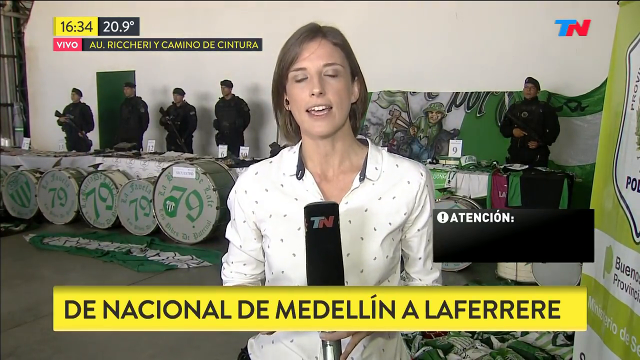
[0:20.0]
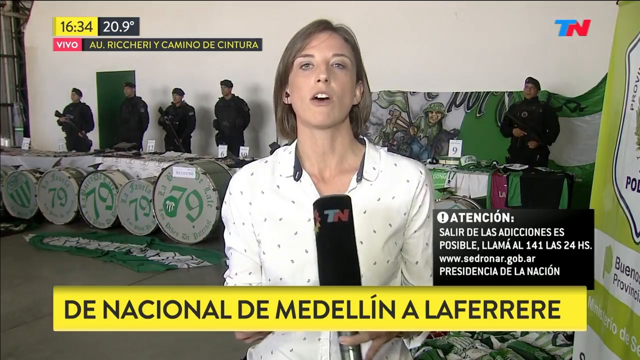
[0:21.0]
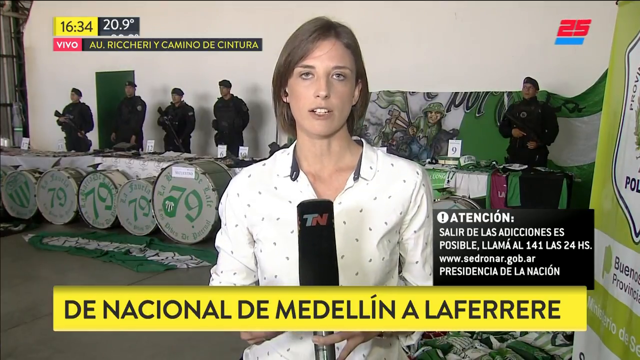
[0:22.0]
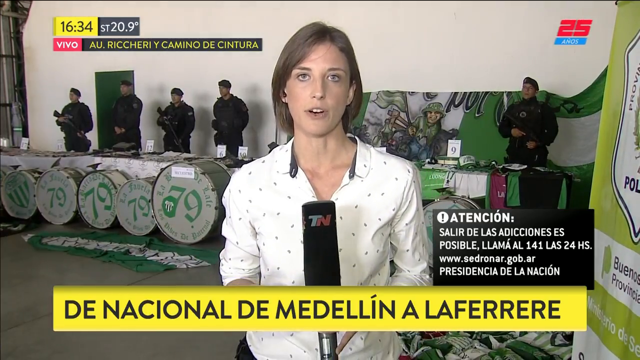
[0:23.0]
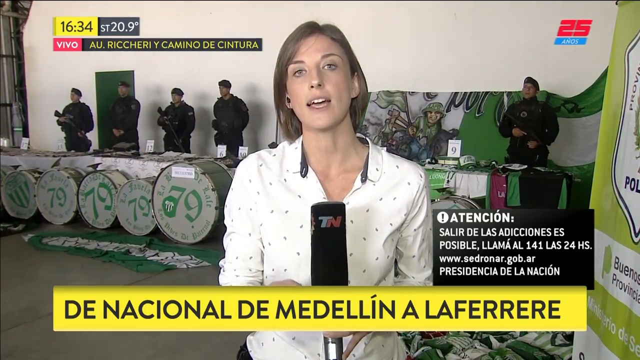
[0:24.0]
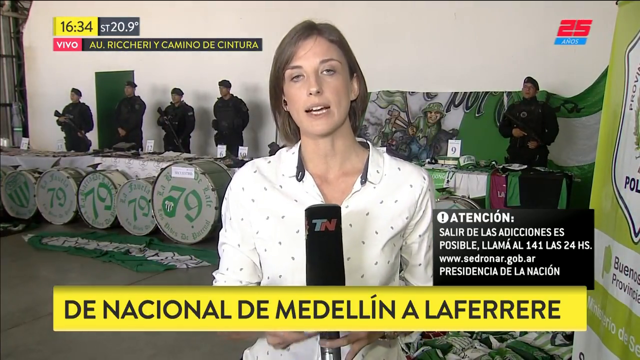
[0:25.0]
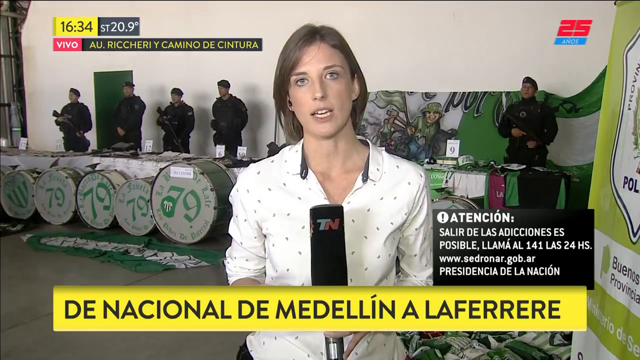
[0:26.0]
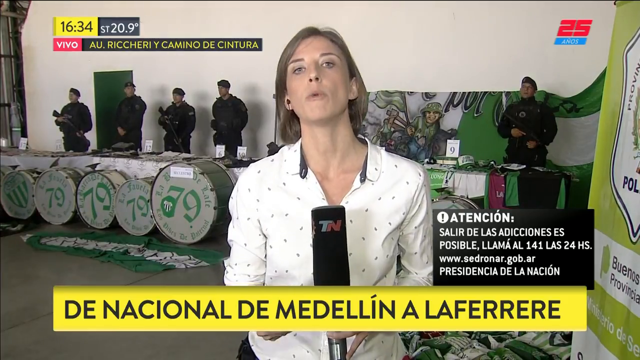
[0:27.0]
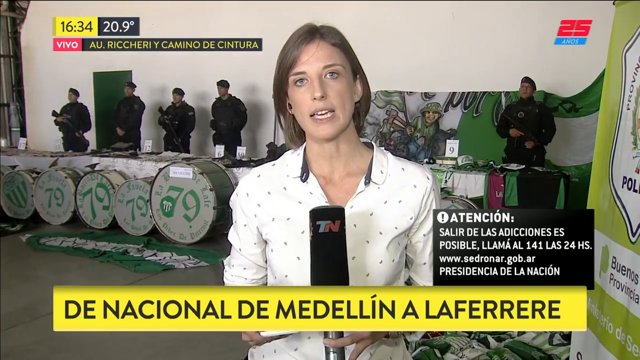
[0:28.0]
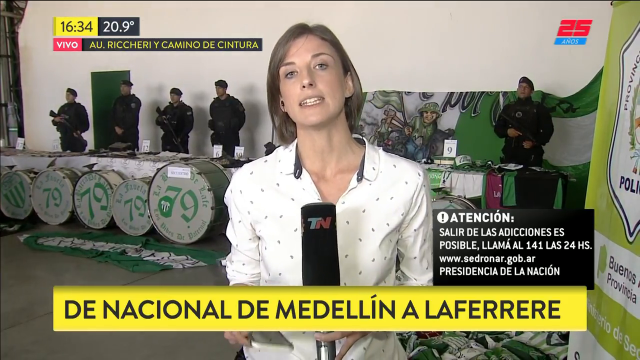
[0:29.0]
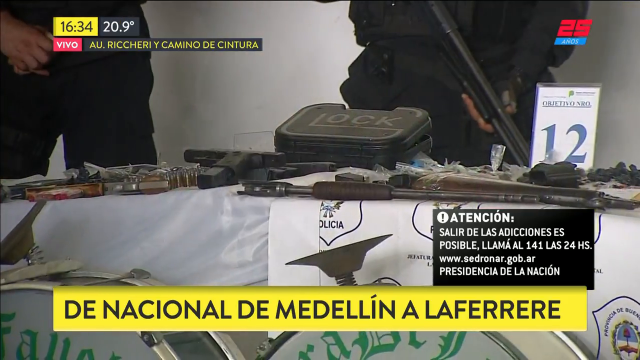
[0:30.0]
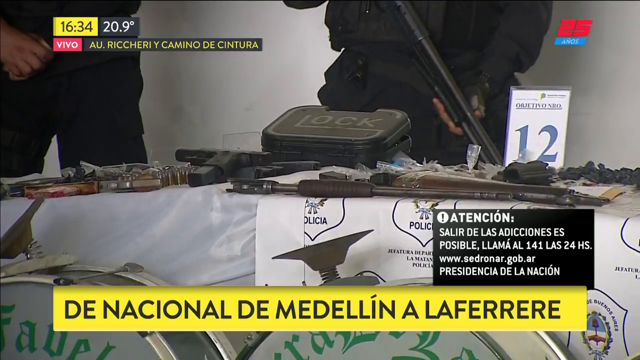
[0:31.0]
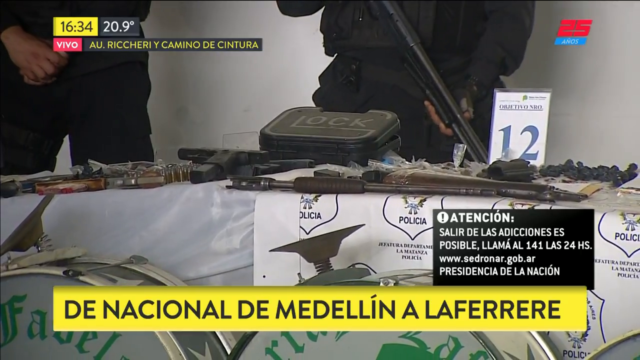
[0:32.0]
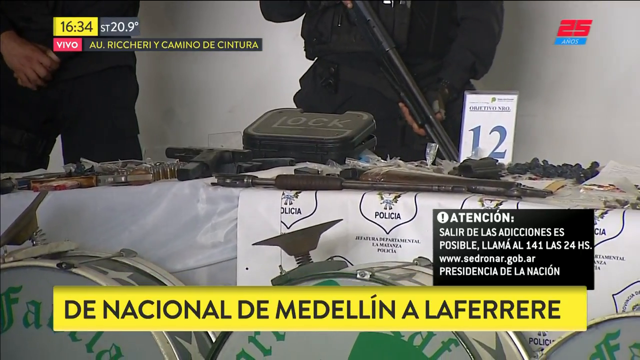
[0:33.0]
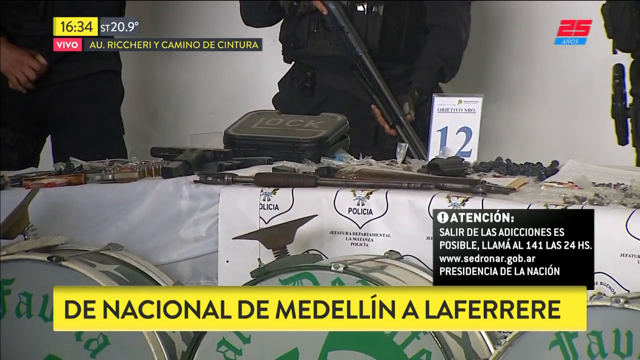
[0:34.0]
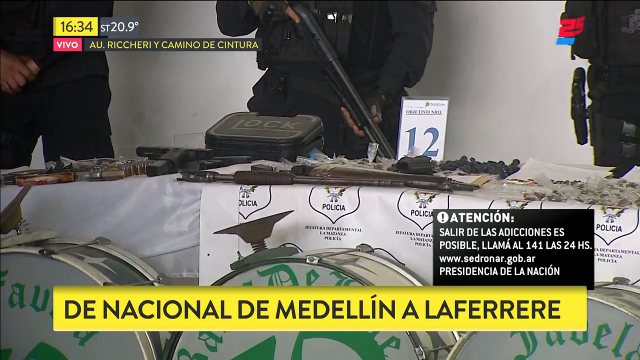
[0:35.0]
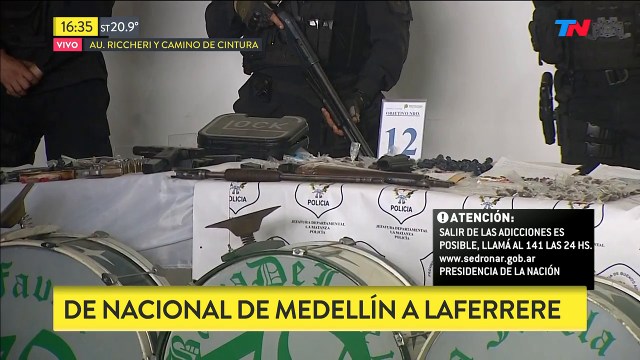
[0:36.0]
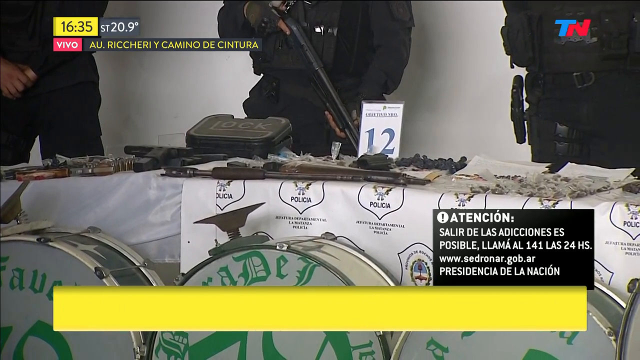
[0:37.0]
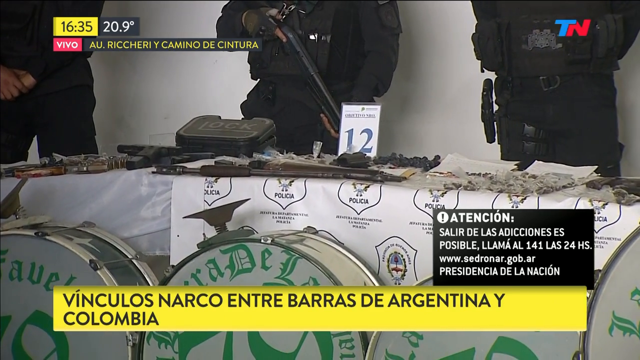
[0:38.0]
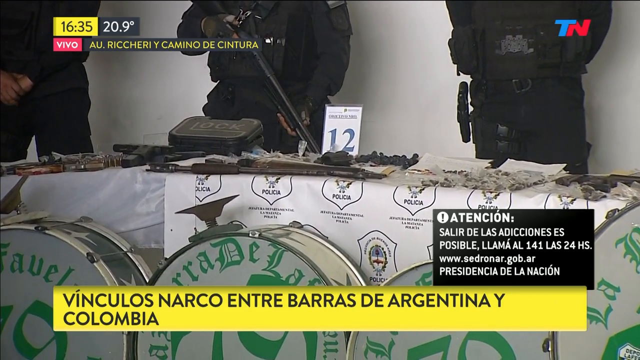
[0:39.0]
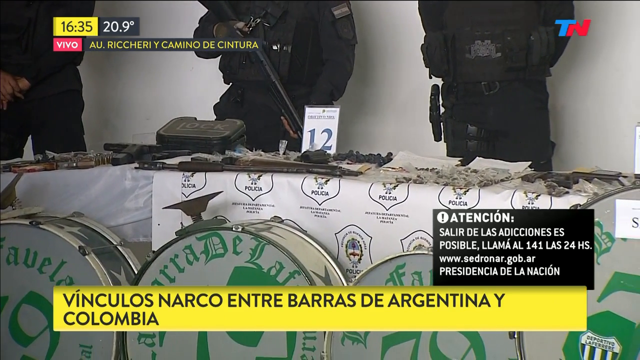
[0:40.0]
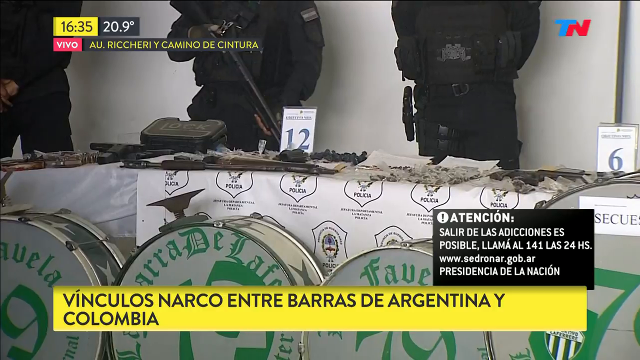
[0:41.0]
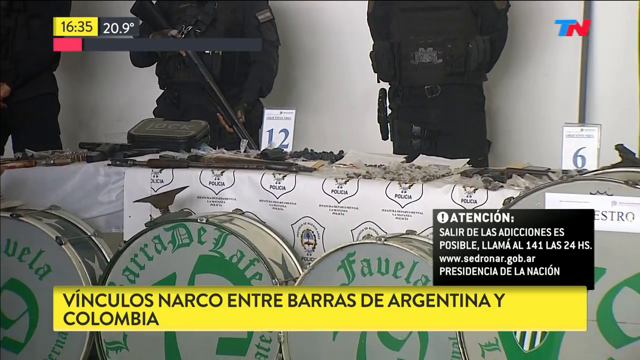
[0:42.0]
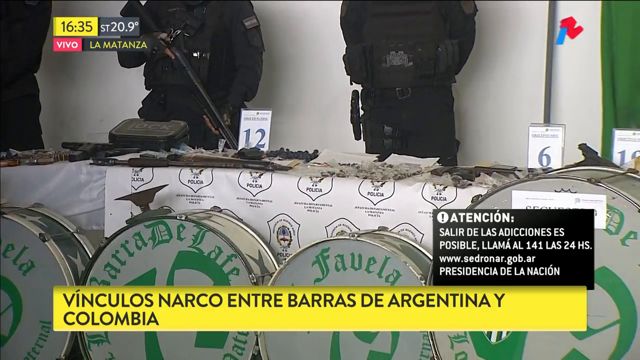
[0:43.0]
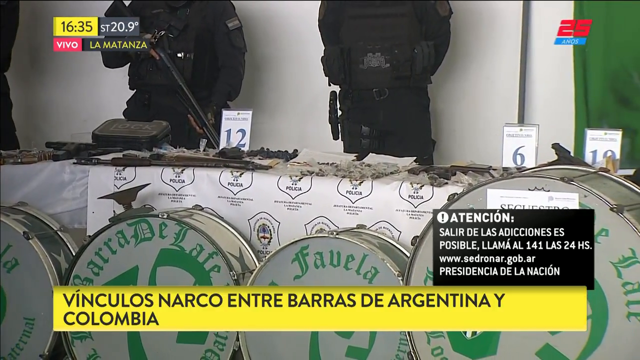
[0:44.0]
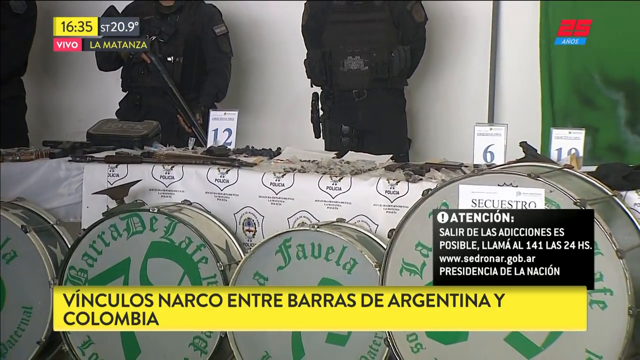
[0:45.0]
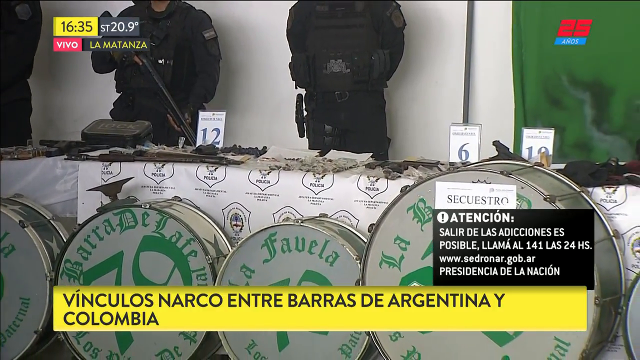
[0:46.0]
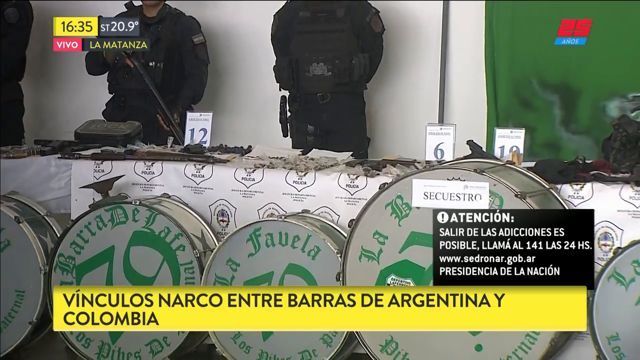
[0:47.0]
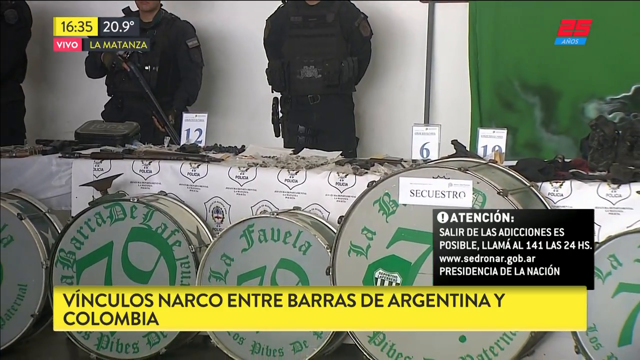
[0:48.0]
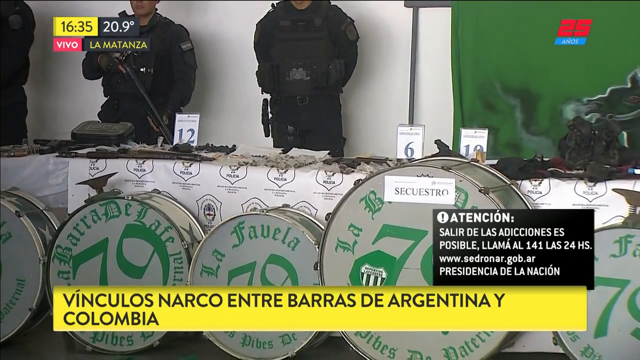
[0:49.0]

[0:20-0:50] In the same space, the reporter continues talking, giving the details of the story. She holds a microphone with a clearly visible TN news logo, looks confident, and is maybe in her early 30s. Her name appears on the screen in a white strip. In the background are the banners marked with the number 79, and about five armed policemen in black uniforms stand behind her, with a little green color in the background. The video then shows a closer look at the table, where small items are displayed. Bright yellow text appears on the video, and later there is white text on a black background in the corner, written in another language, maybe French.